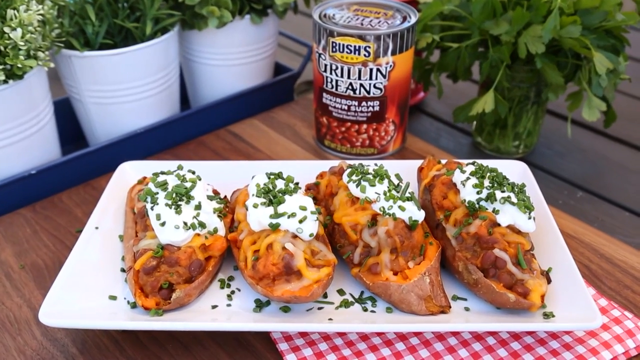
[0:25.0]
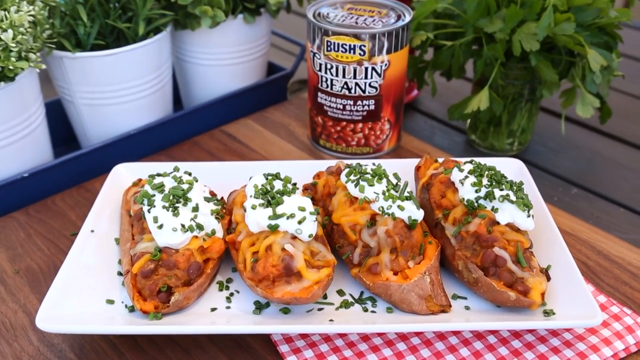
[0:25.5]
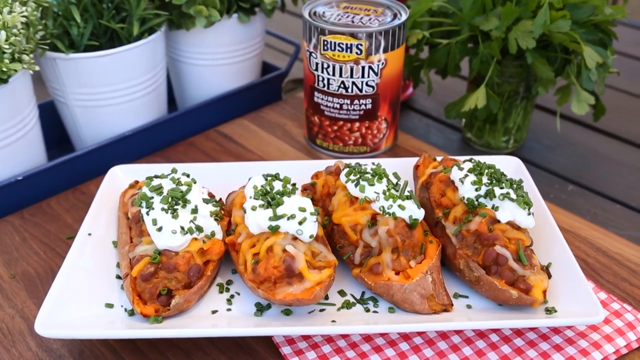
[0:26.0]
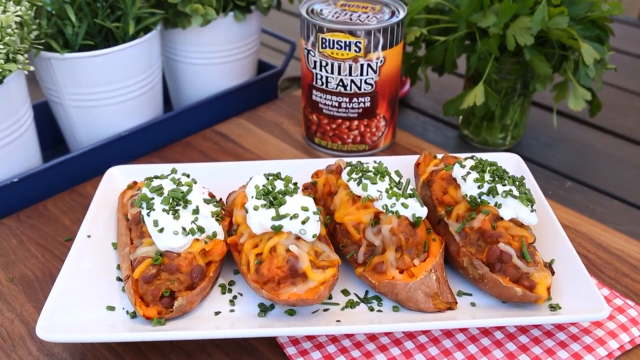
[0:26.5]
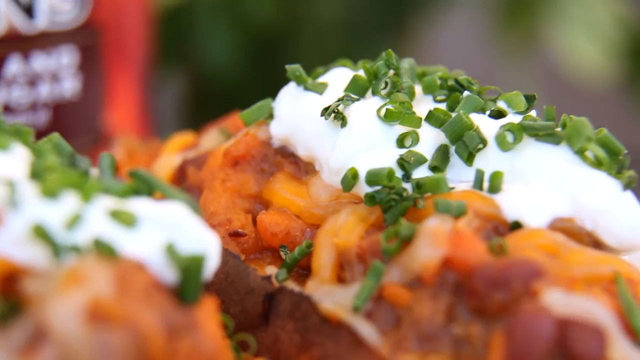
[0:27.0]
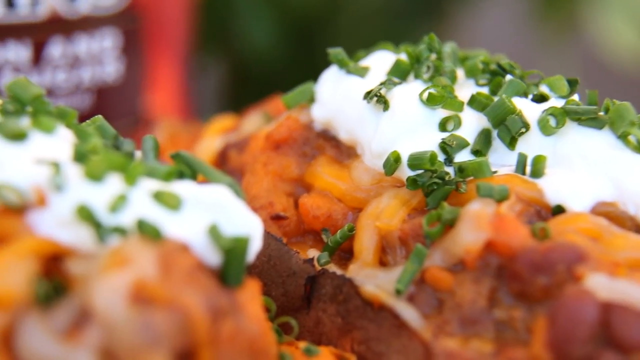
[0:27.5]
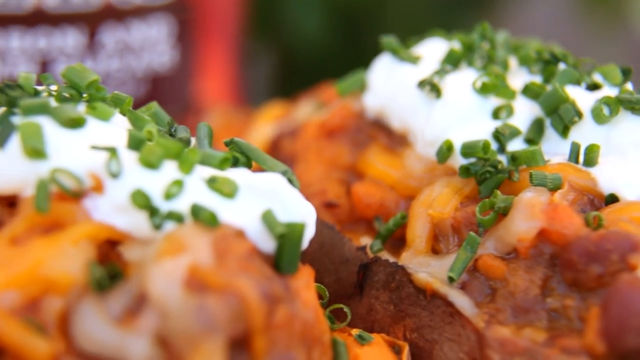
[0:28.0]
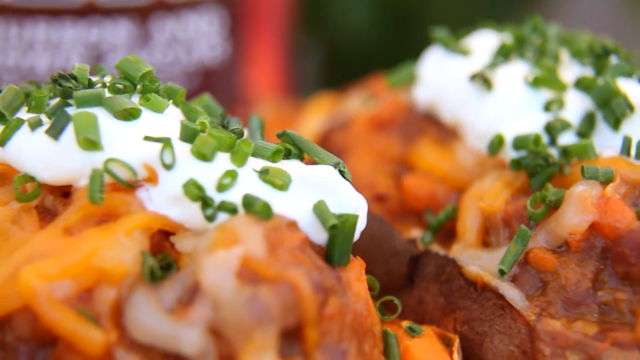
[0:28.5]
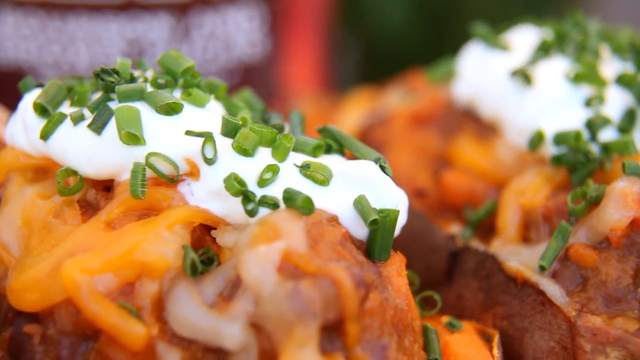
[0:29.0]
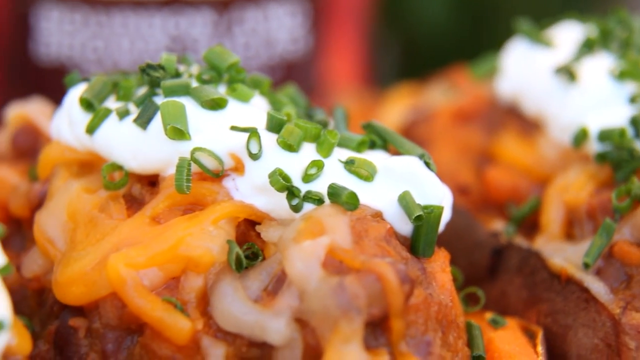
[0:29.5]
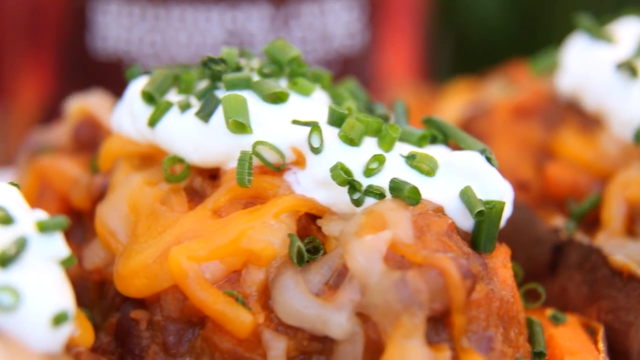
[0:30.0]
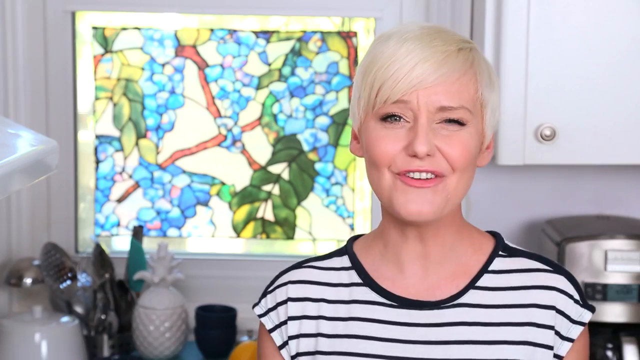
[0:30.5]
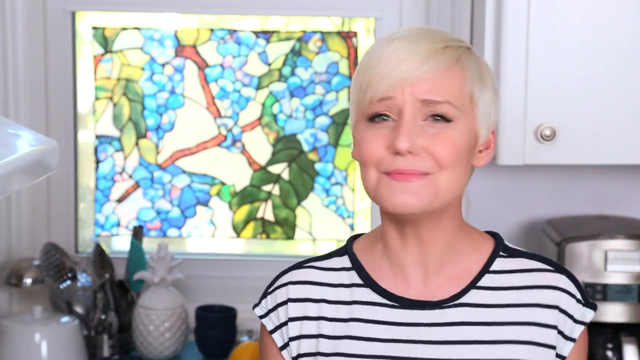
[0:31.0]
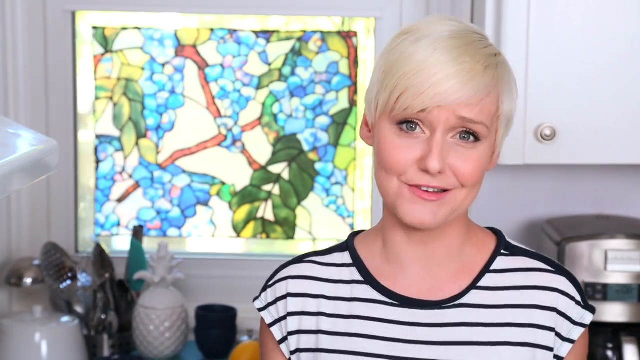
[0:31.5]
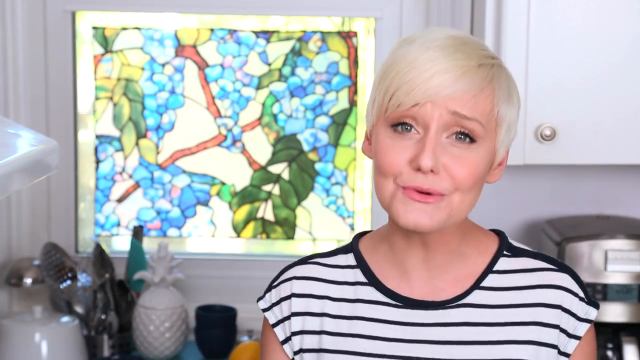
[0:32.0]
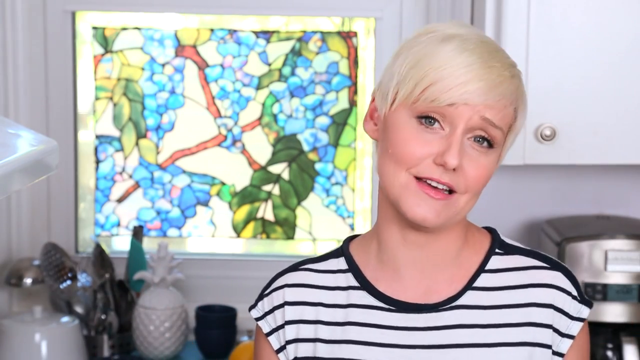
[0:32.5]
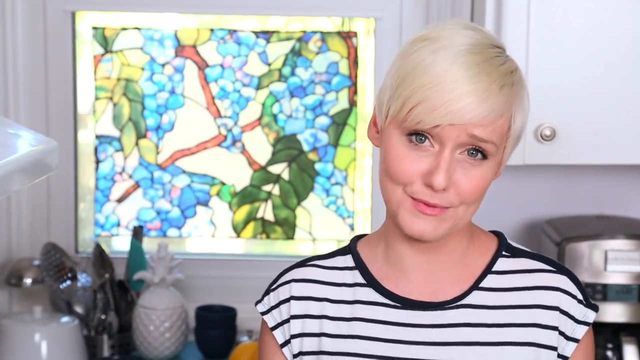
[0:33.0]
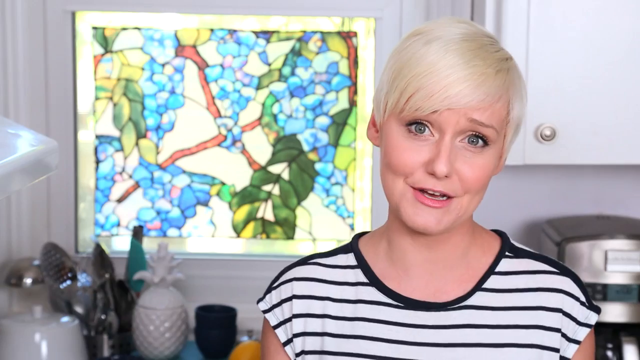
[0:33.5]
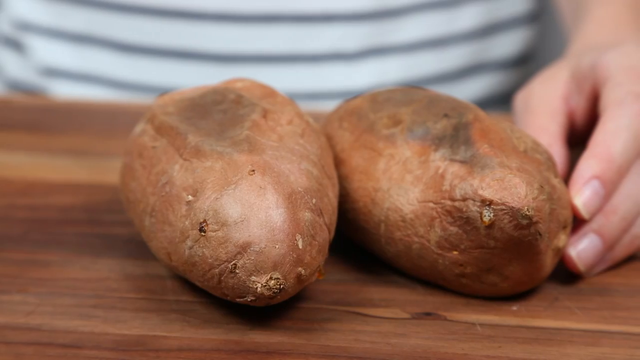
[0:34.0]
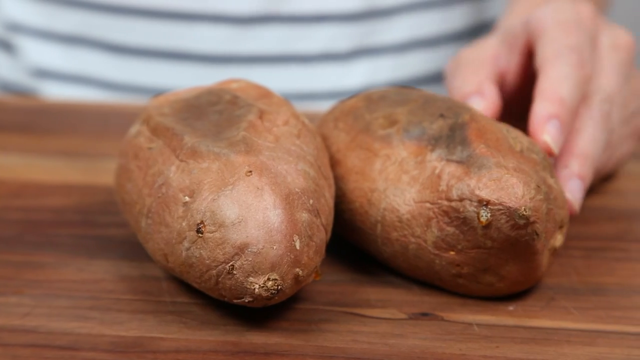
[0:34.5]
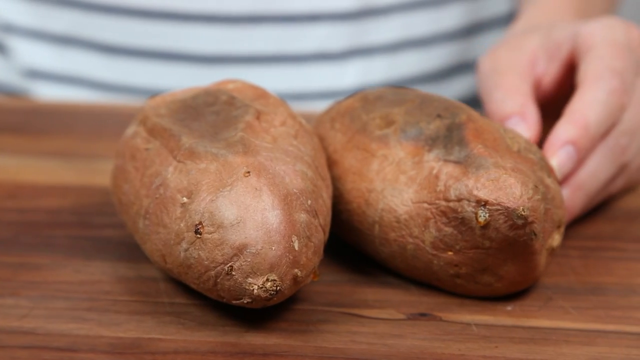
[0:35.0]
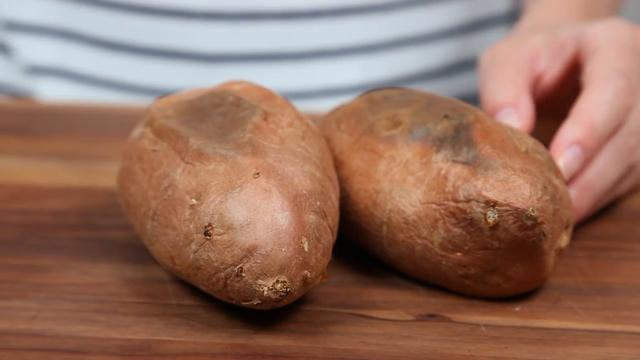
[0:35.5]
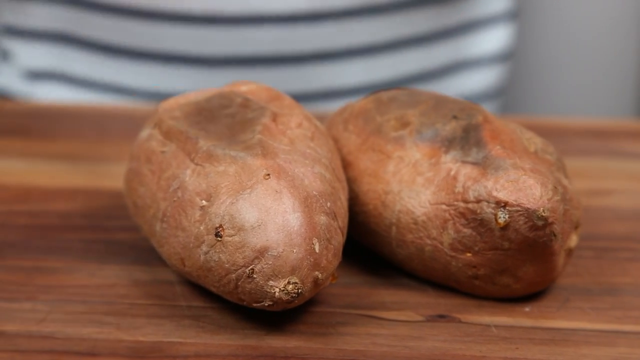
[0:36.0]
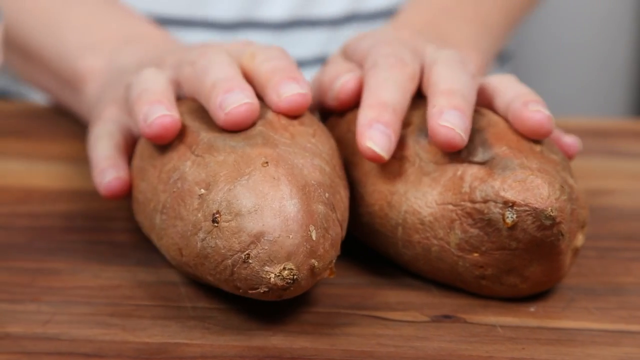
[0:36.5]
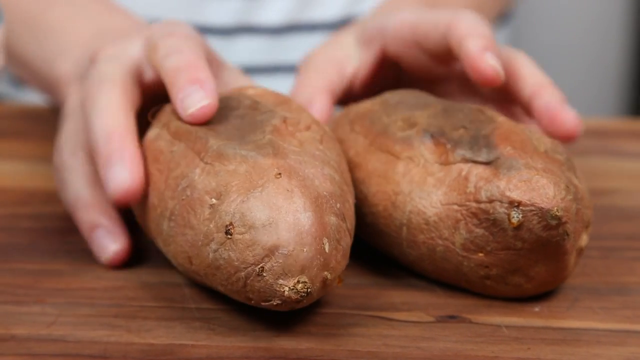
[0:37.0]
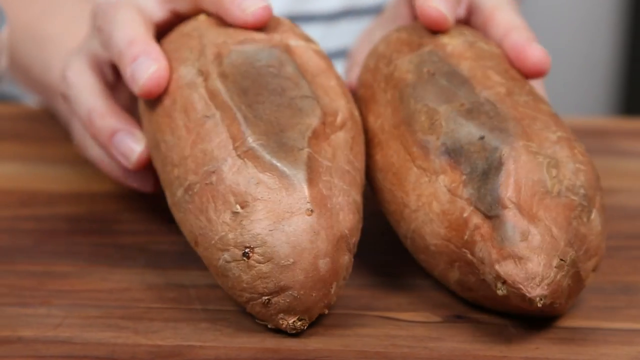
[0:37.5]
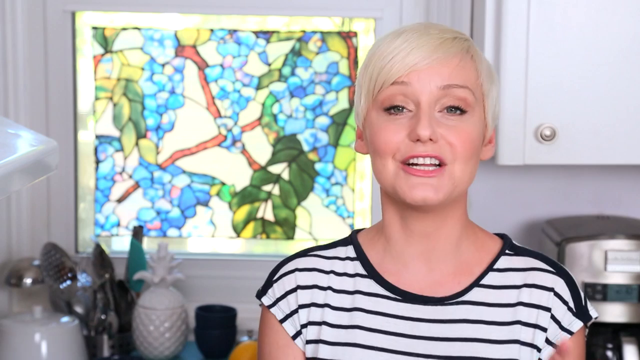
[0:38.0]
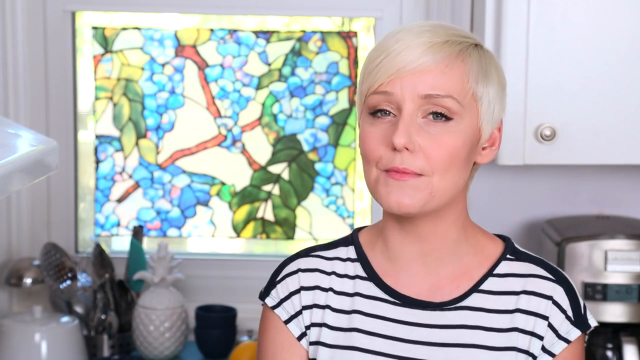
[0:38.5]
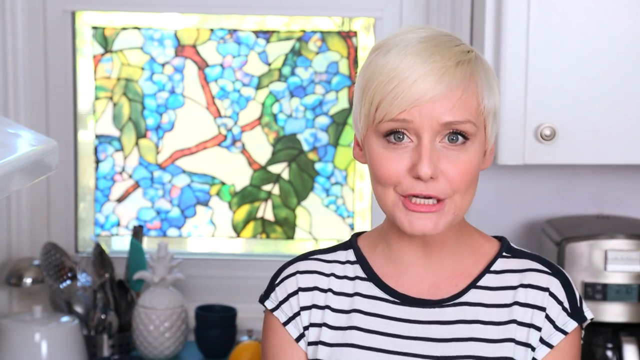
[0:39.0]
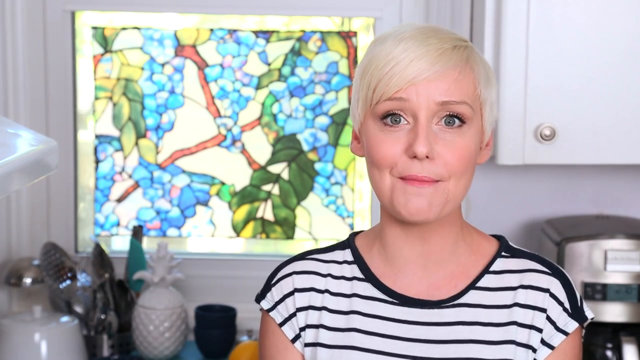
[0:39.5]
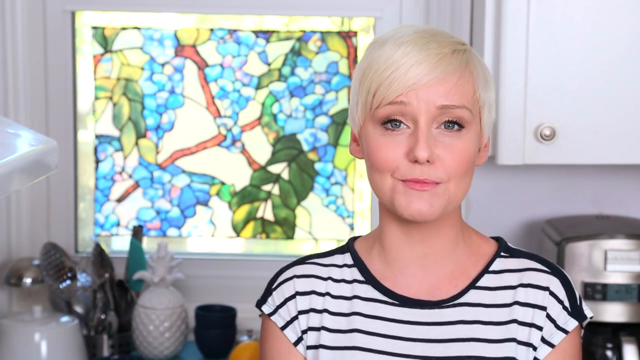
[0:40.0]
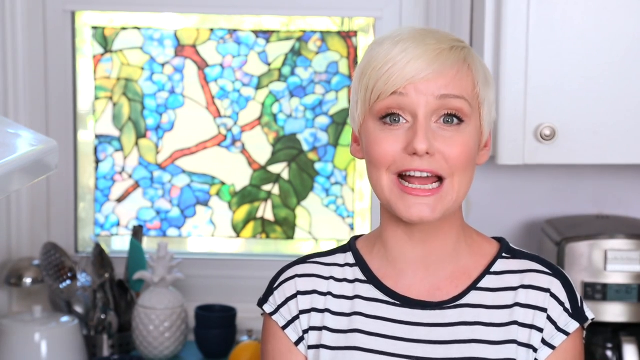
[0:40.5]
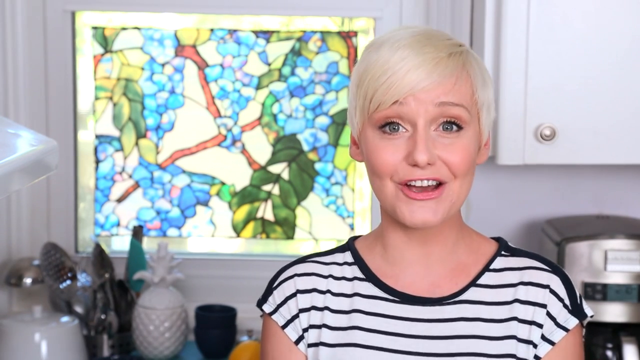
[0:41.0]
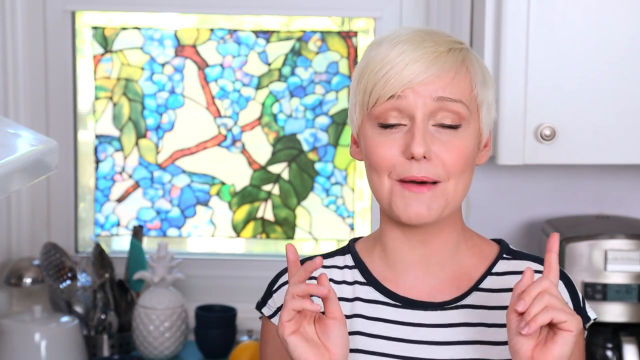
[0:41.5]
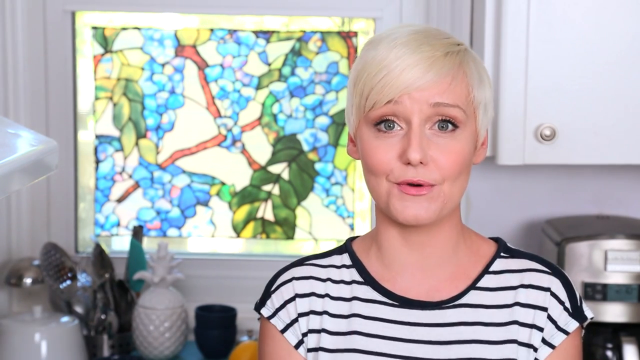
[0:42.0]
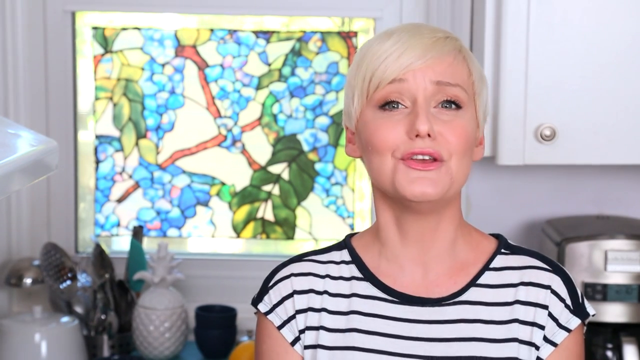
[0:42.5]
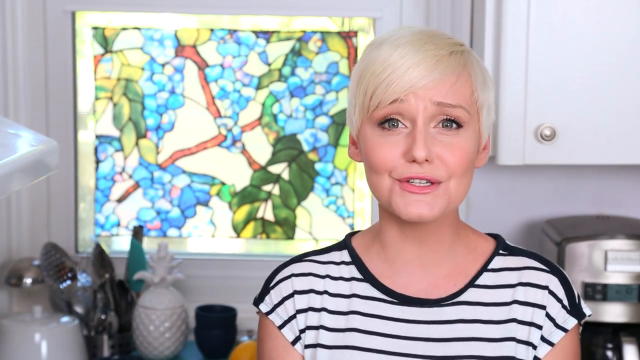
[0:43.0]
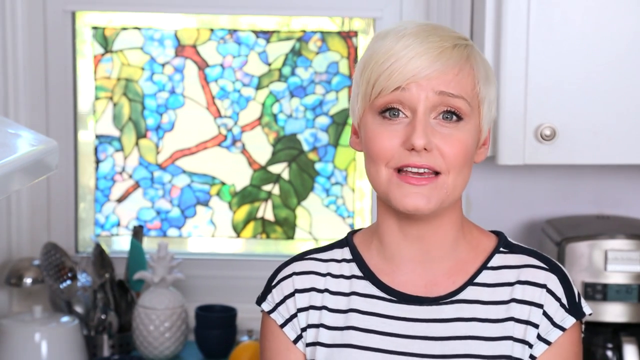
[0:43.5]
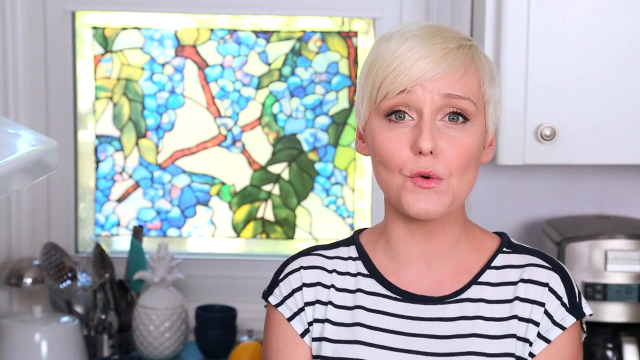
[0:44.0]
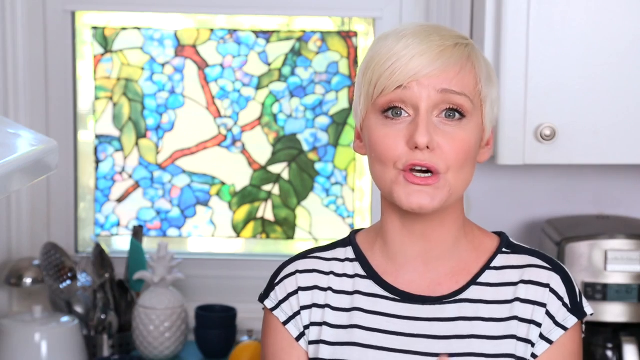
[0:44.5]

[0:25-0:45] The four food items on the white plate are shown; they look like beans of some sort with a white sauce, presumably sour cream, and a green topping. The woman, still in the white and black striped shirt, continues to talk while looking at the camera. In one scene at a brown table, her waist and her left hand are visible in front of the camera, along with two brown potatoes lying next to each other and touching. She places both hands on top of the potatoes and appears to grab them slightly, then starts talking toward the camera again. She maintains a lot of eye contact with the camera, though the scenes change. In the background are some sort of white pots with green plants coming out of them, appearing to be maybe on a patio of some sort outside. She appears to express herself with her arms and to use her hands to communicate.